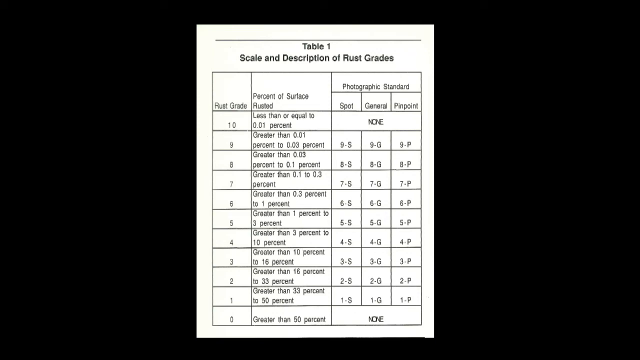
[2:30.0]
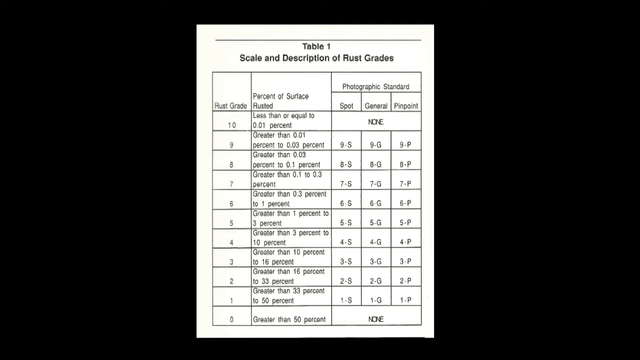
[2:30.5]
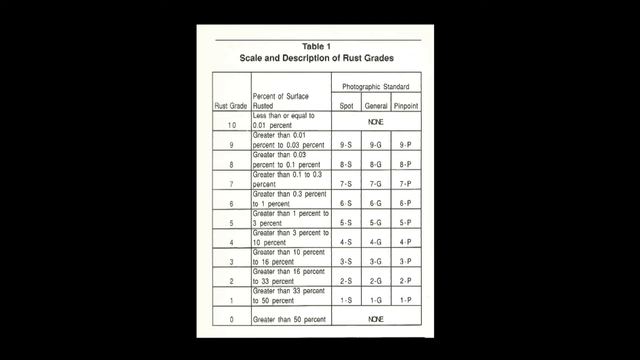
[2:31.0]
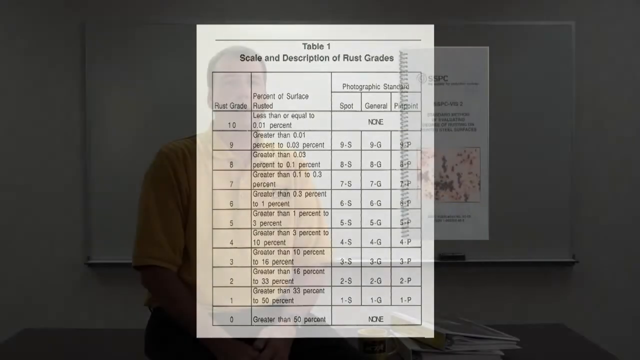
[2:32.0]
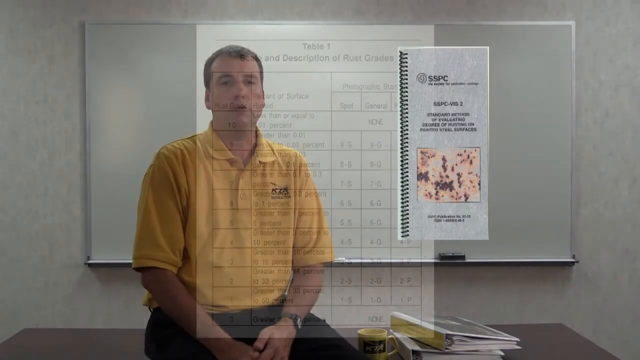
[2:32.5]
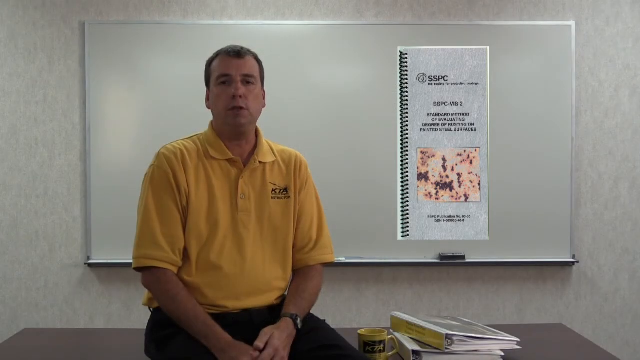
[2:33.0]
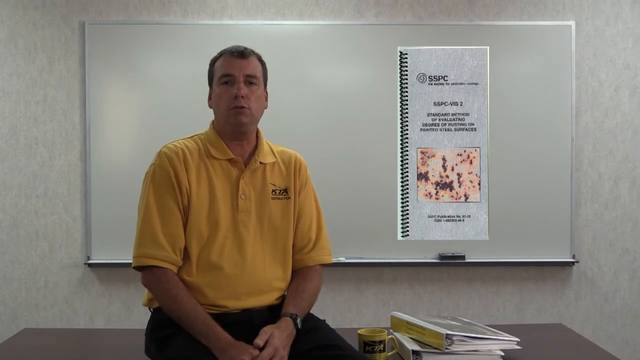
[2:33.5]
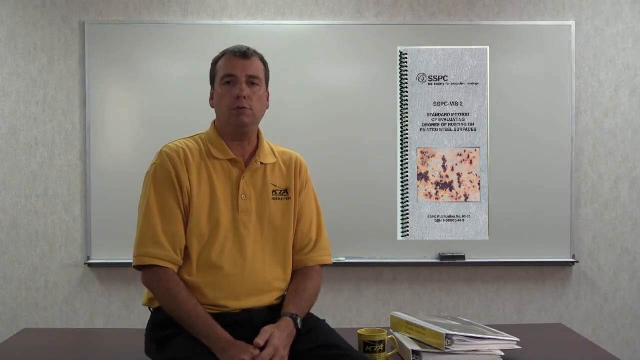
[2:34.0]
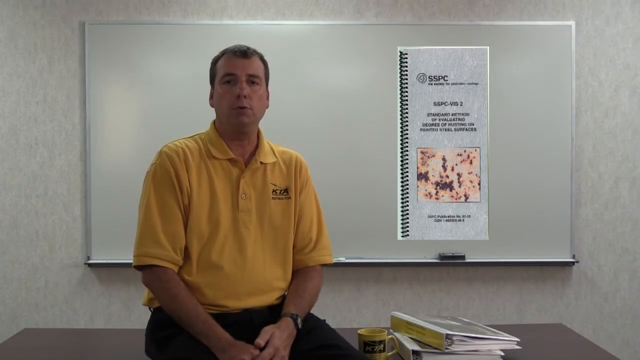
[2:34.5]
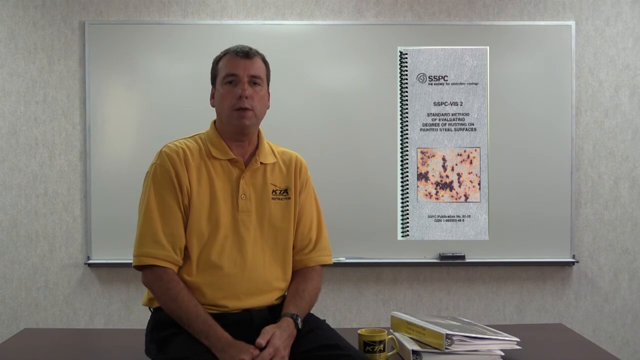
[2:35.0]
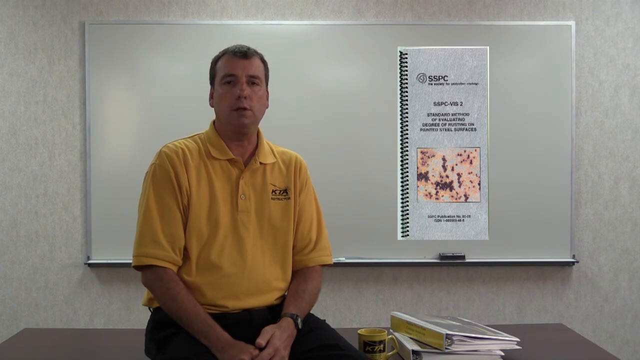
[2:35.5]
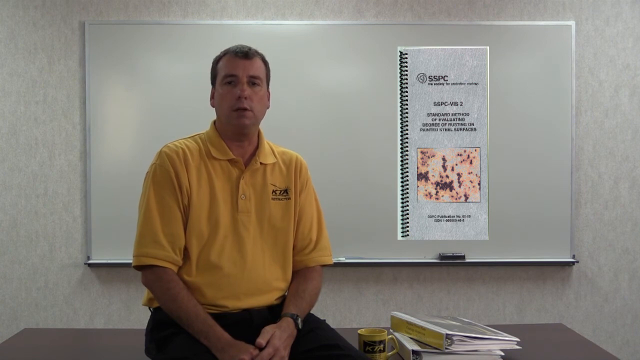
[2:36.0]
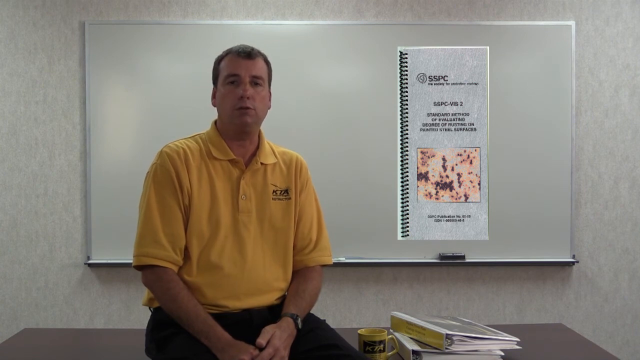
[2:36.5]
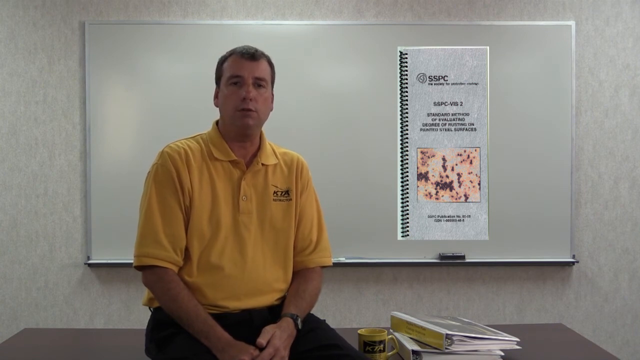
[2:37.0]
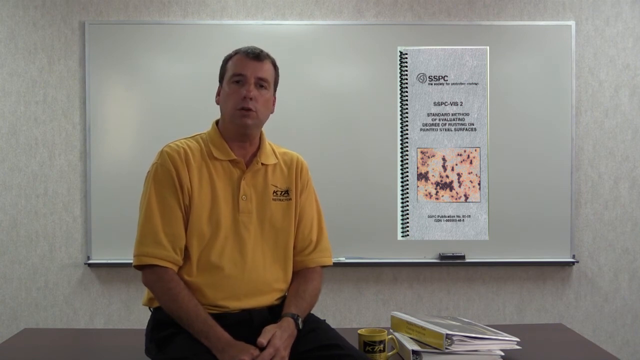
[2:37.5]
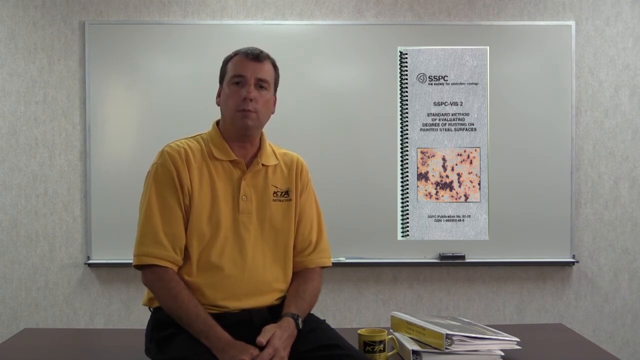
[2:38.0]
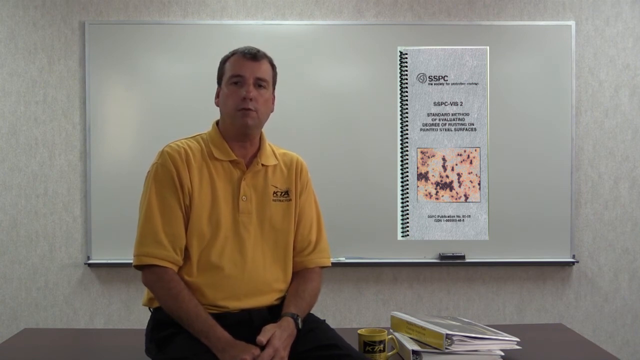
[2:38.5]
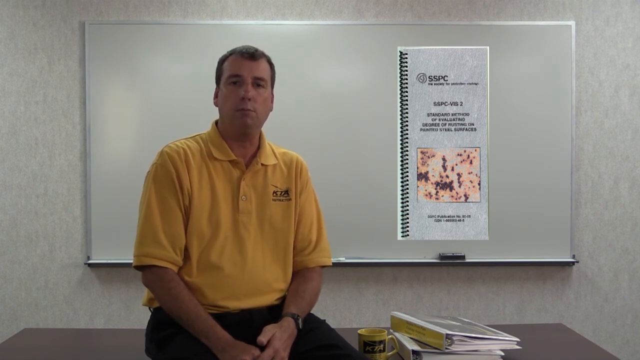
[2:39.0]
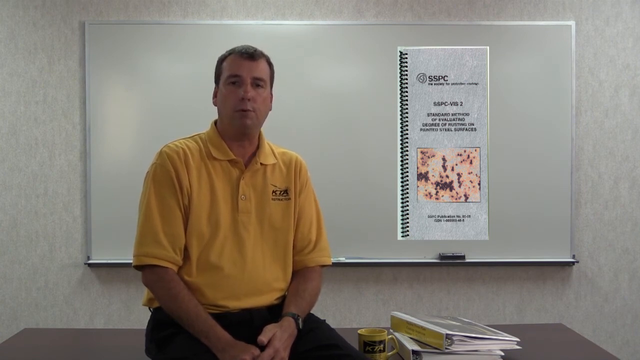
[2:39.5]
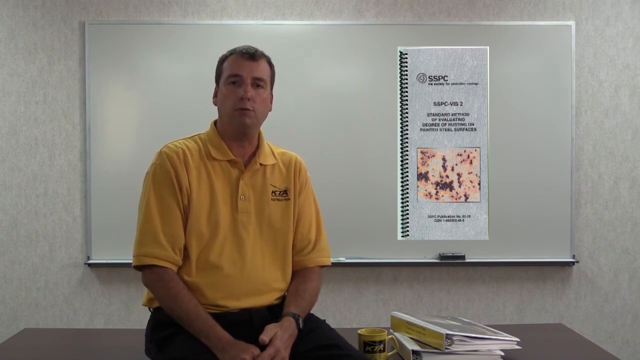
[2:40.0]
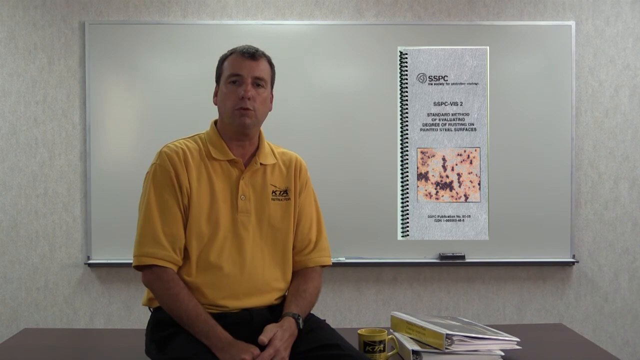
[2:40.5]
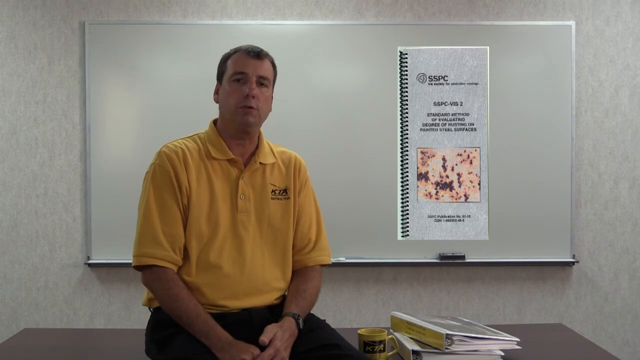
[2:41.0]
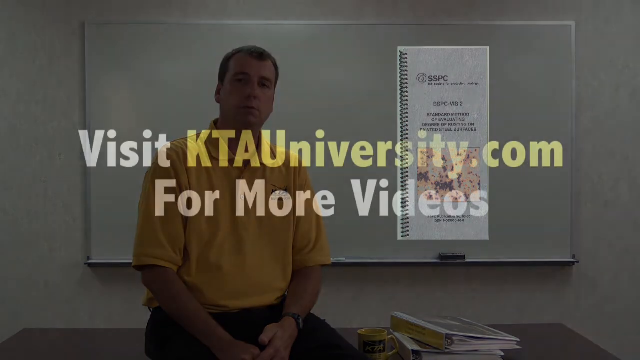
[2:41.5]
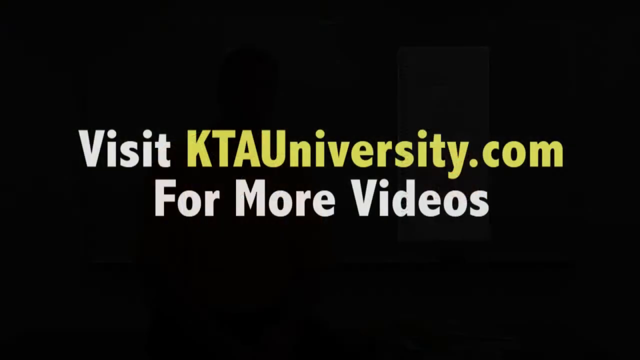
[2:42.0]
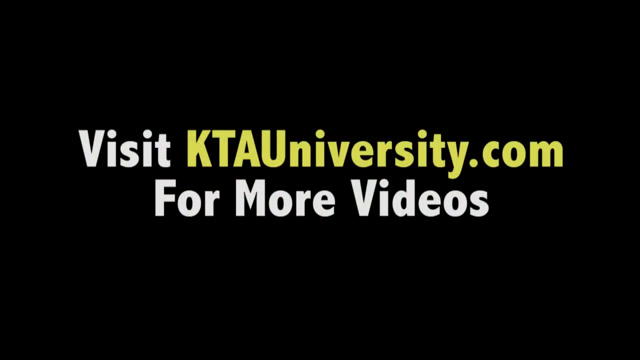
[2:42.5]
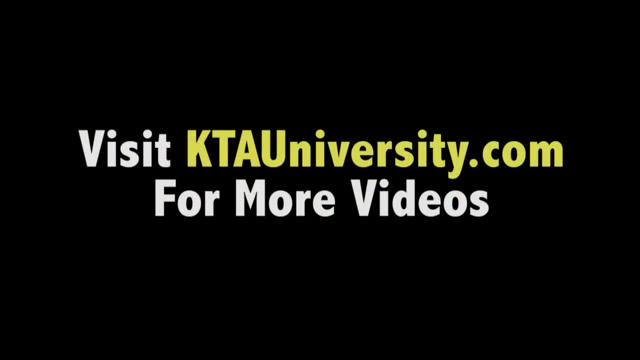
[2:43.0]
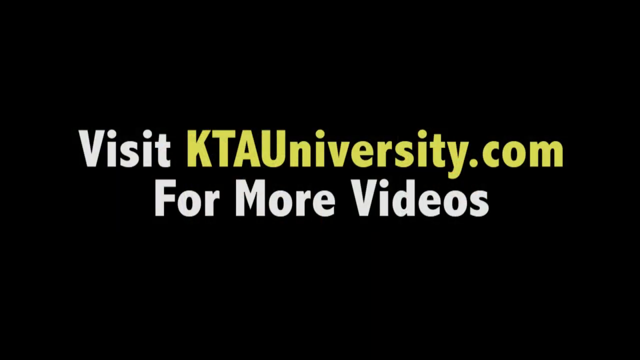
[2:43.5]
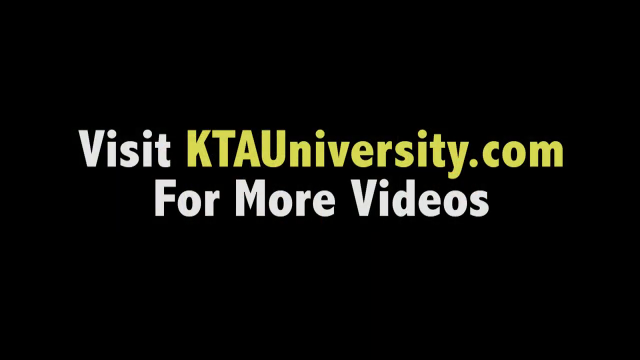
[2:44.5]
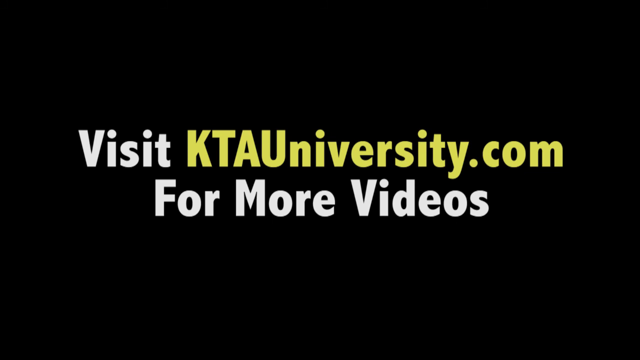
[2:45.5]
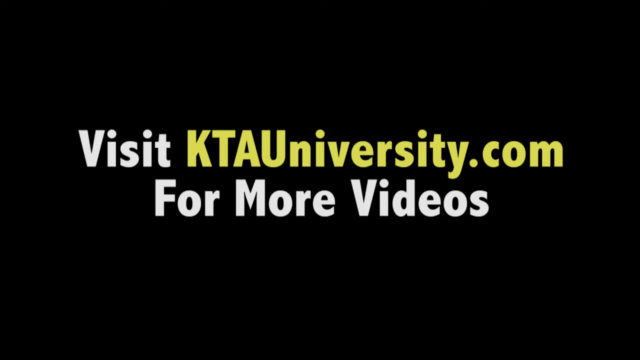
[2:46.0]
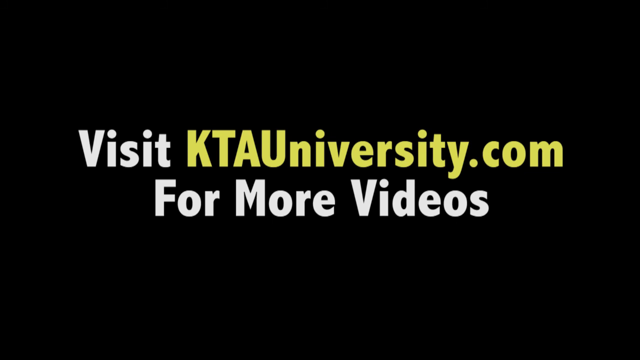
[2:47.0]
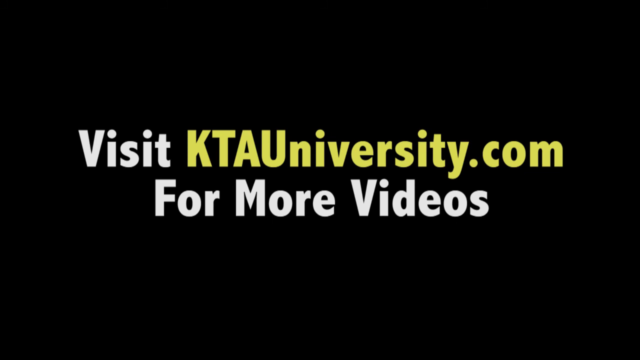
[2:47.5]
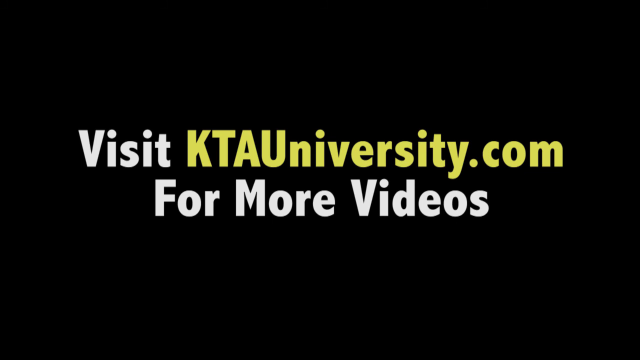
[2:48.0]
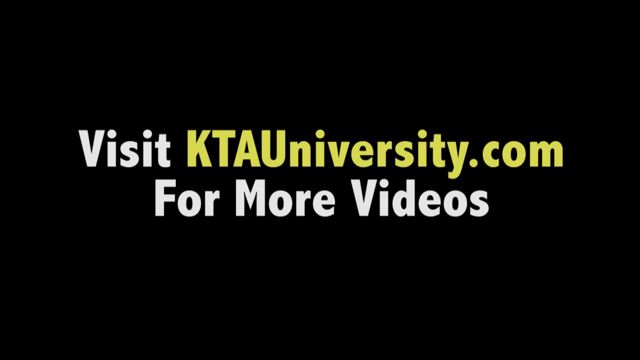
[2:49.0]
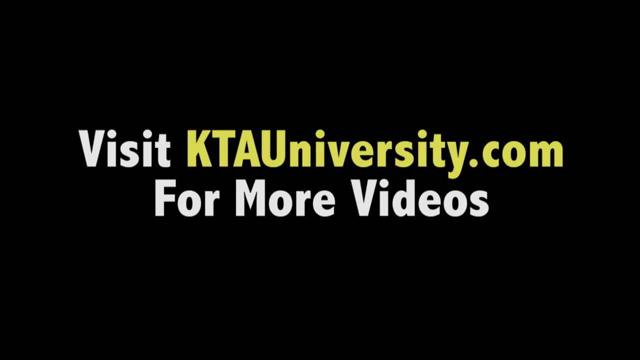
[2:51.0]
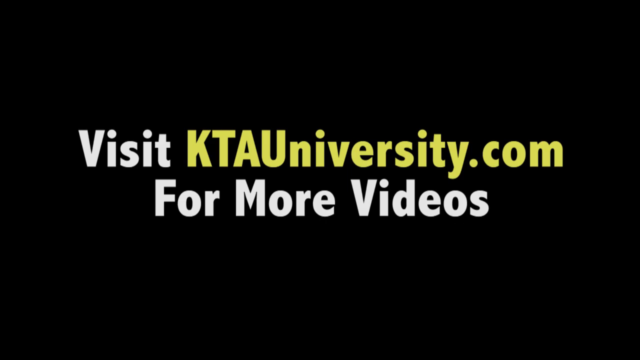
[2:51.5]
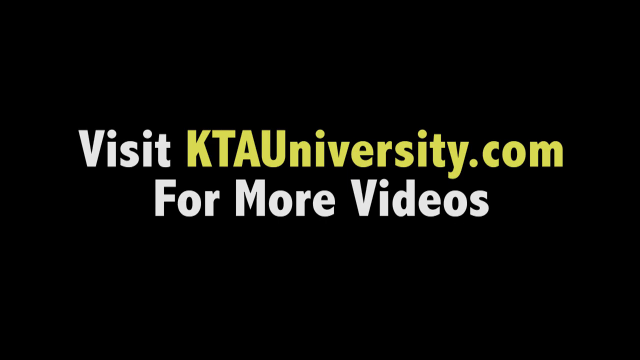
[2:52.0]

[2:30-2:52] The lecturer wears a yellow t-shirt. A table showing the scale and description of rusting grades is shown, along with a book known as the SSPC. There are notes on the table, a rubber on the blackboard, and rusted steps are shown.